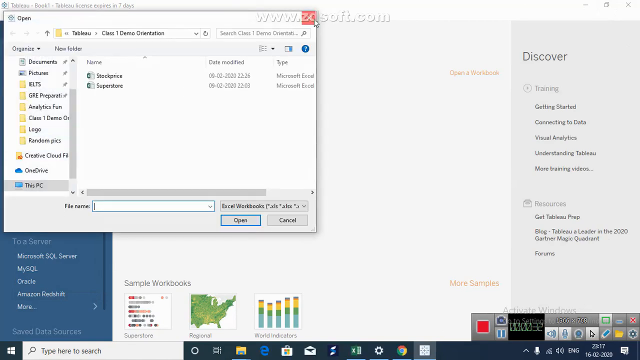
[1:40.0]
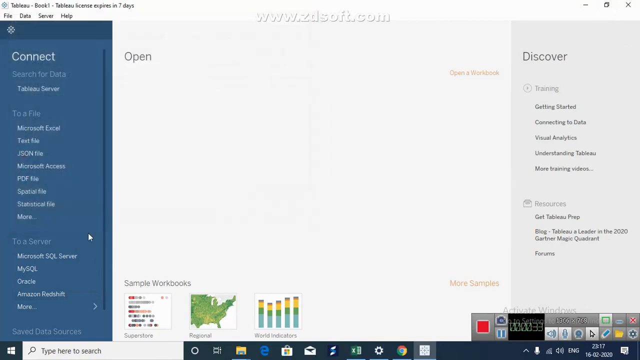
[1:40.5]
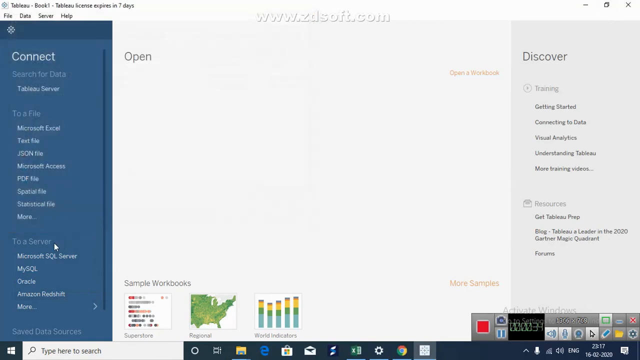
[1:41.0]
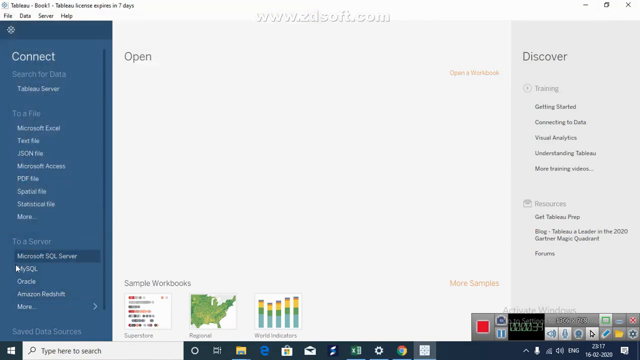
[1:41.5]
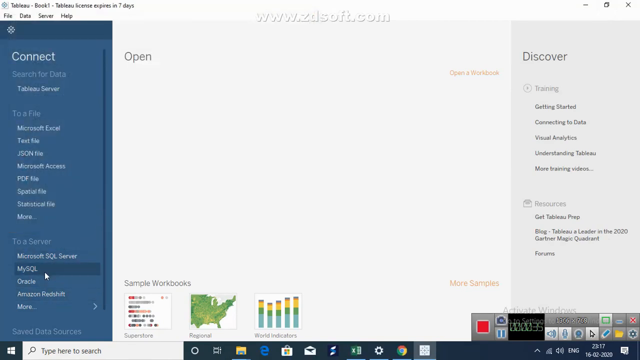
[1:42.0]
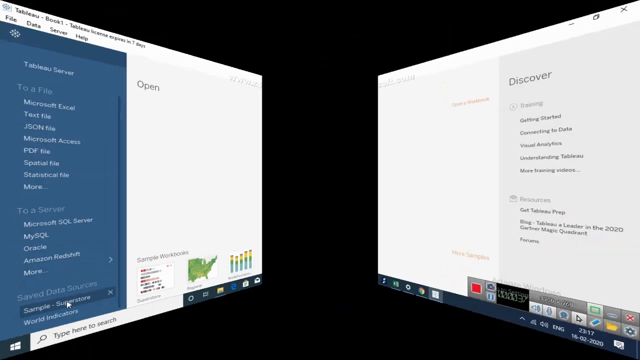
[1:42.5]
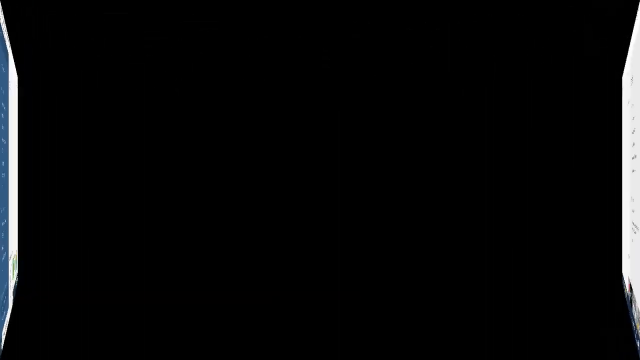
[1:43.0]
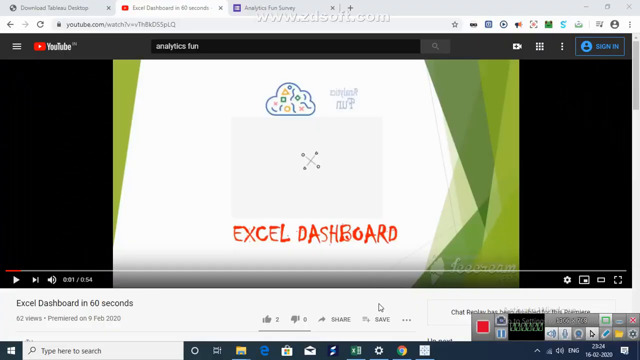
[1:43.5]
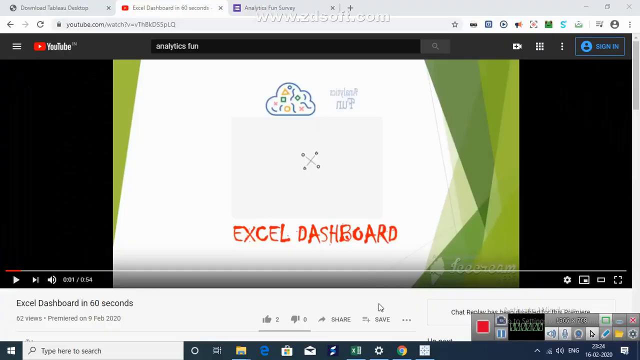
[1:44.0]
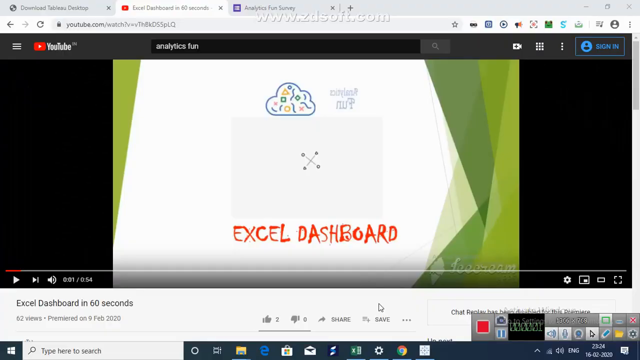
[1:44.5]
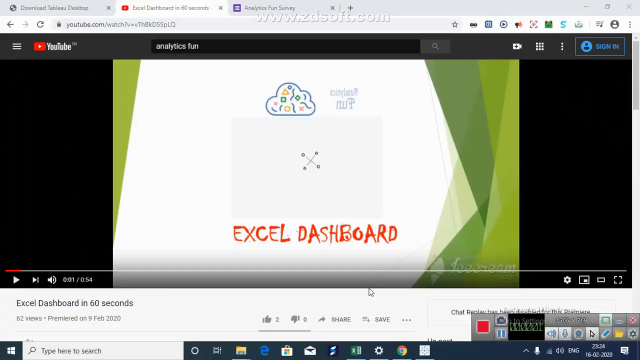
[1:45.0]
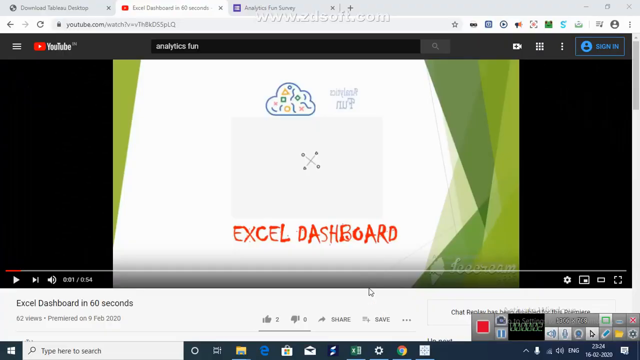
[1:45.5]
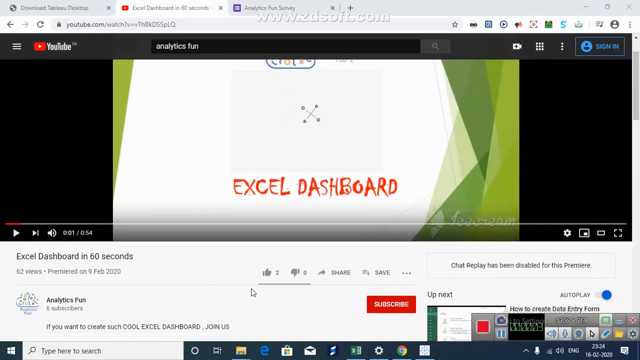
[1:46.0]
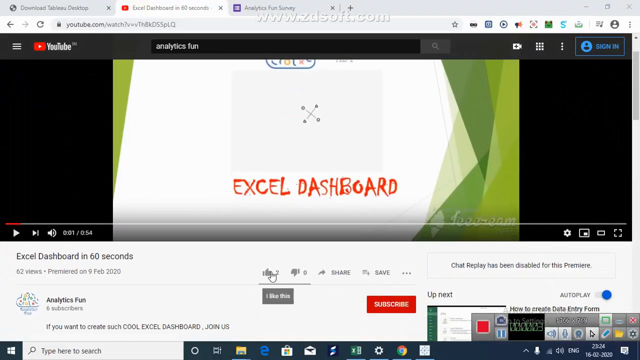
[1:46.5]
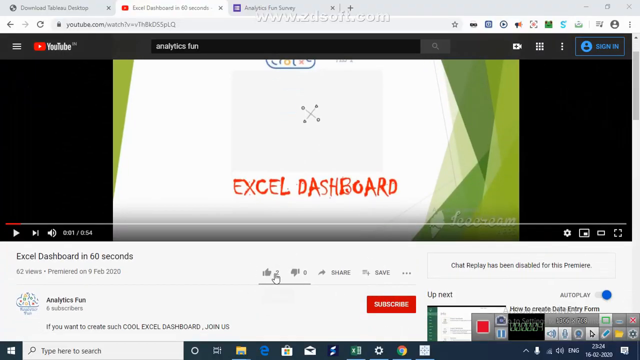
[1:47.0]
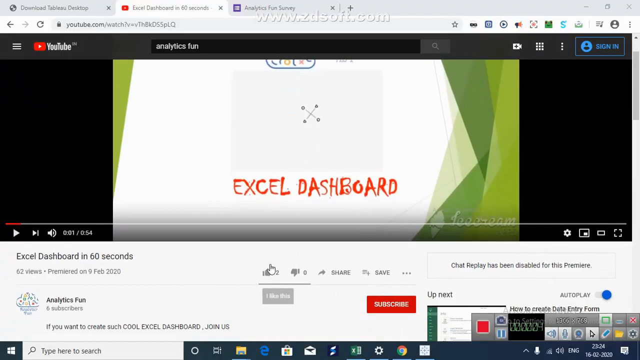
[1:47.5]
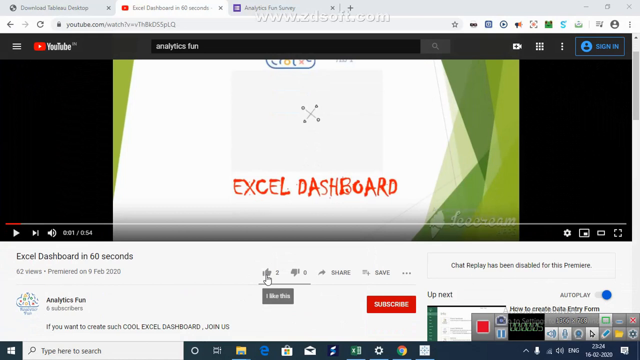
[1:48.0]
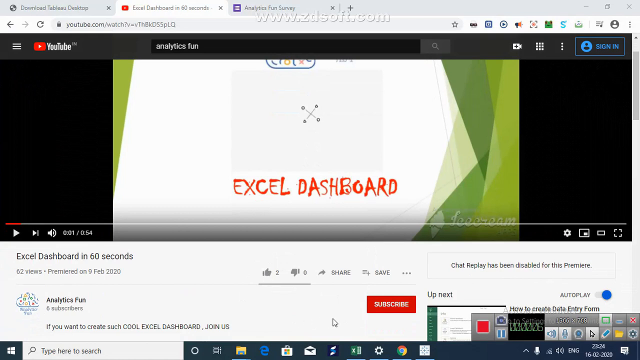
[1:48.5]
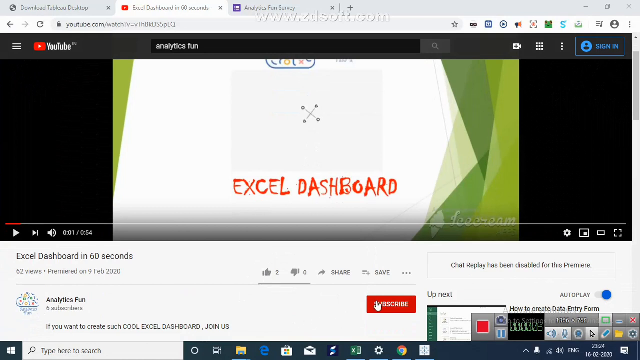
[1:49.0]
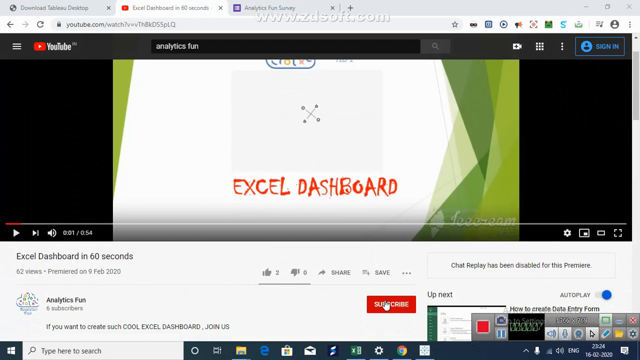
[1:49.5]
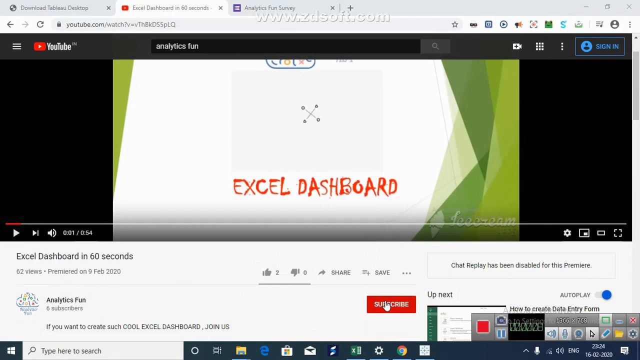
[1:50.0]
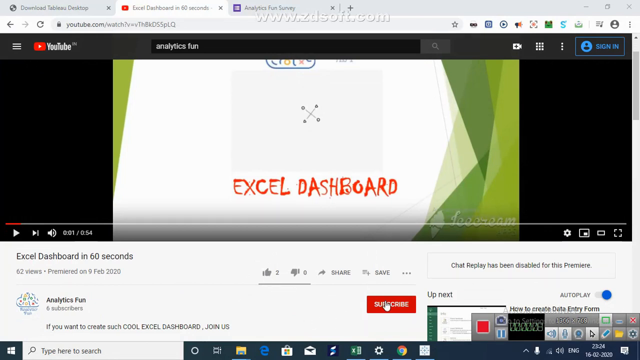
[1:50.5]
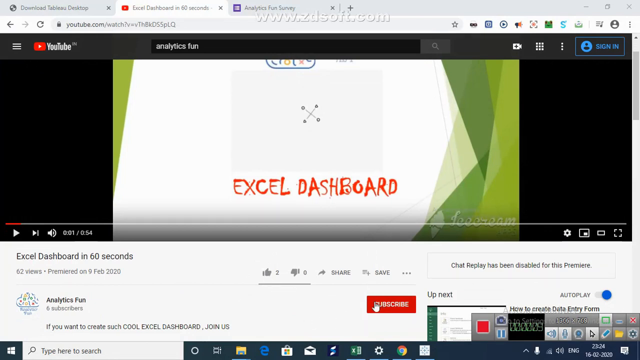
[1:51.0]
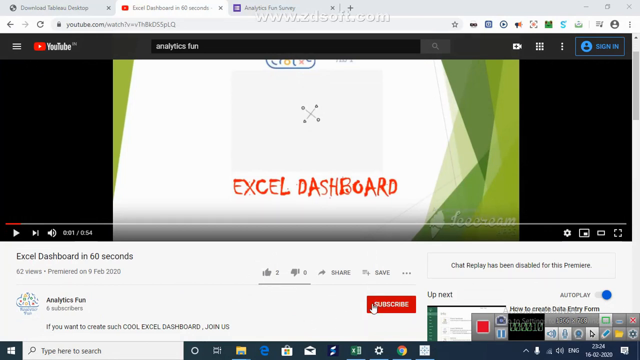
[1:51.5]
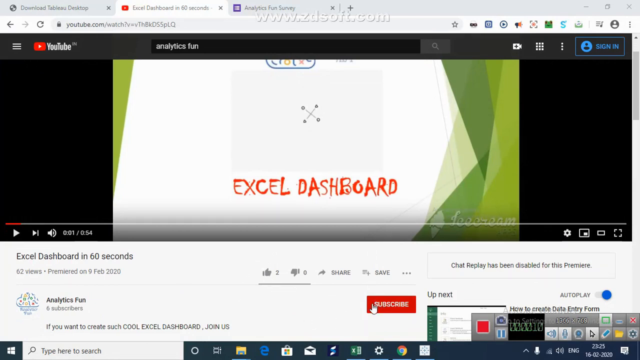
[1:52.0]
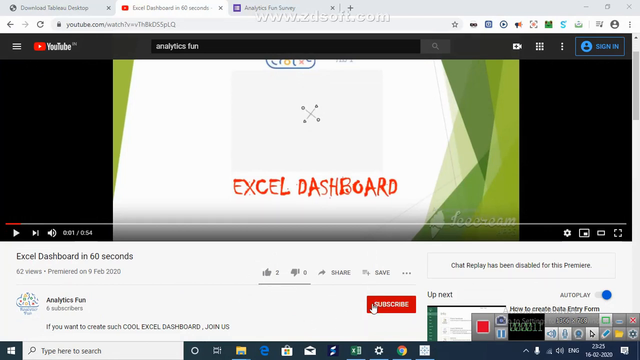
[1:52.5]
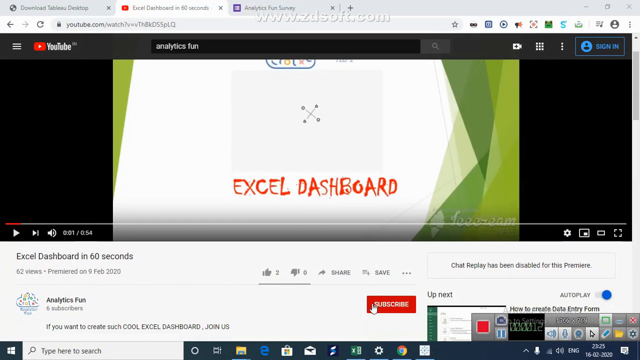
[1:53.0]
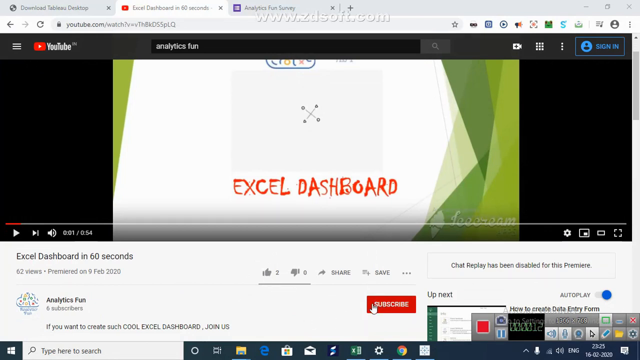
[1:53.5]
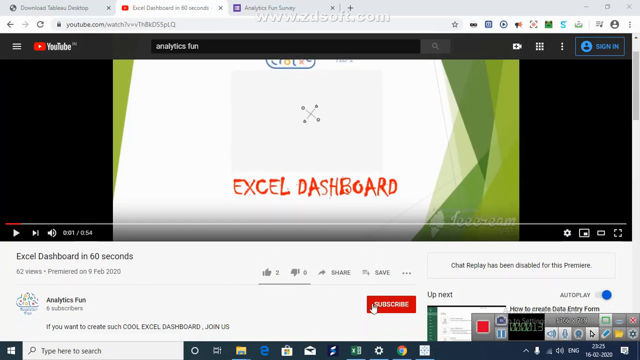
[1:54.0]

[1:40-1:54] On the left side of a webpage another smaller tab is open, and the cursor is on the X, or exit, button at the top. On the left side of it are a number of files, and to the right are two files. At the bottom is an open button with a cancel button to its right. The cursor clicks the close button, then moves down, and the two windows sort of fold out away from each other, revealing a YouTube homepage. A video at the top of the screen has a postcard on it reading "Excel Dashboard" in red letters, and below that "Excel Dashboard in 60 seconds". There is a description of the video. The mouse hovers over the like button, which shows two likes, then moves down to the red subscribe button, which has "subscribe" in white letters.